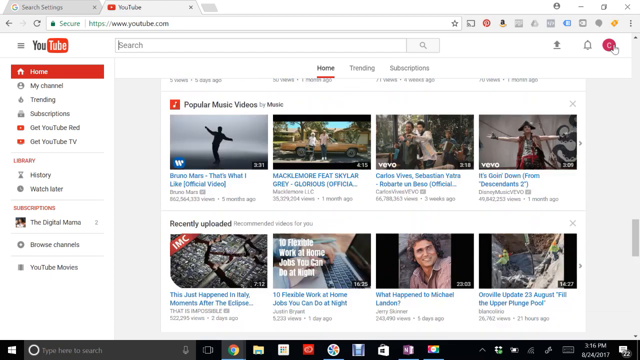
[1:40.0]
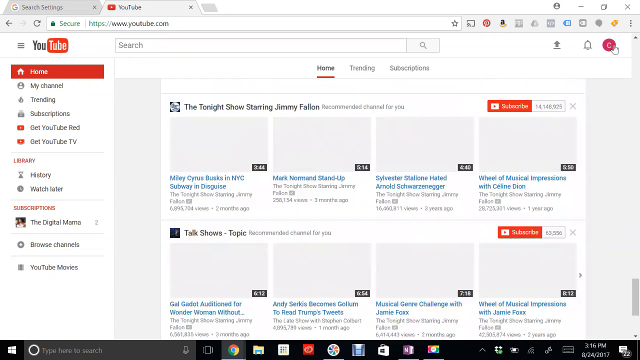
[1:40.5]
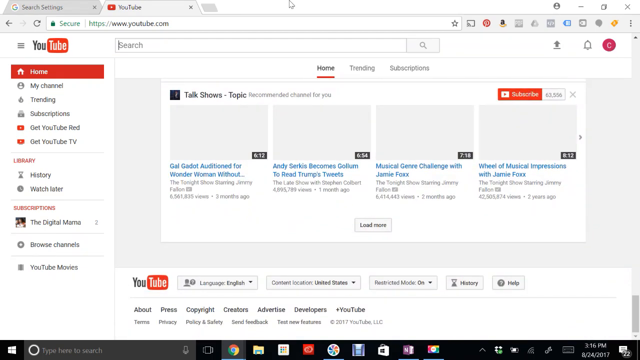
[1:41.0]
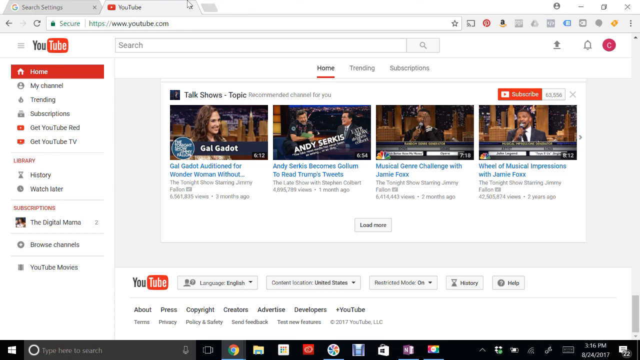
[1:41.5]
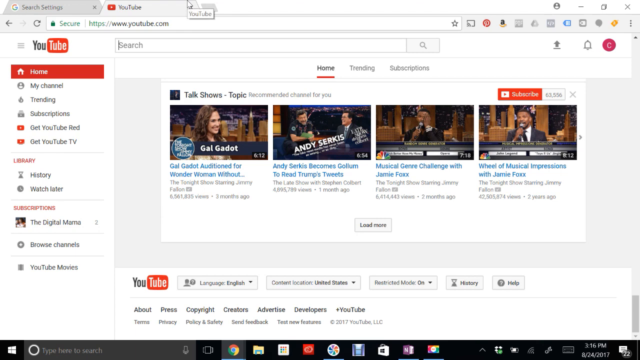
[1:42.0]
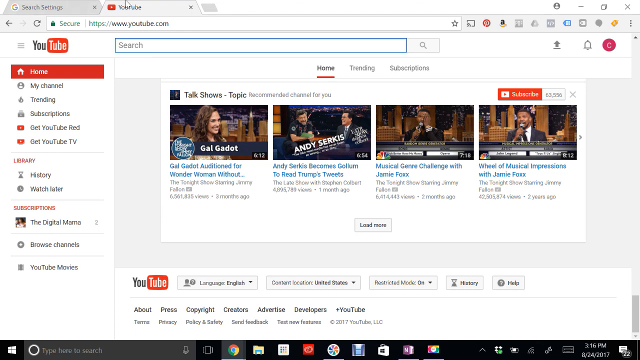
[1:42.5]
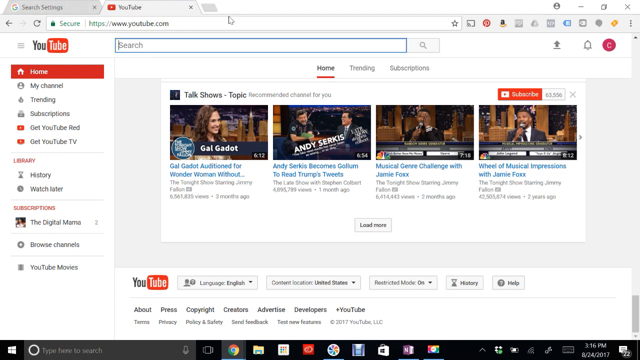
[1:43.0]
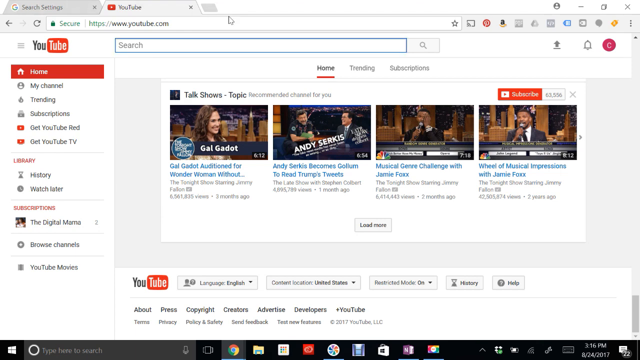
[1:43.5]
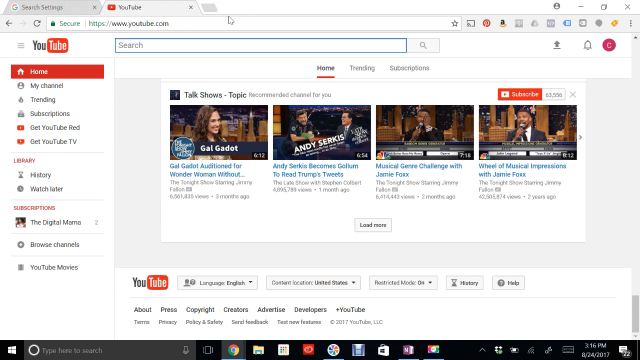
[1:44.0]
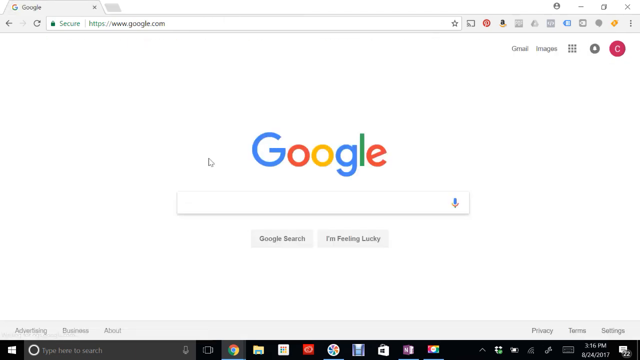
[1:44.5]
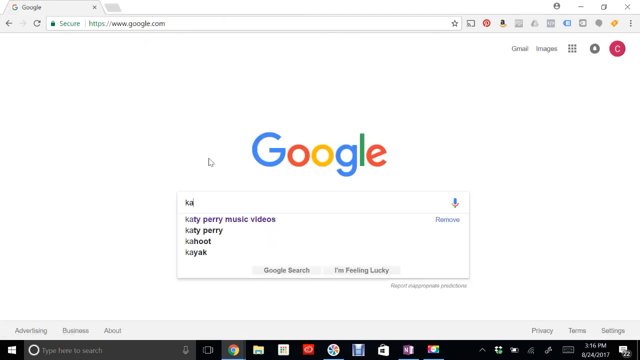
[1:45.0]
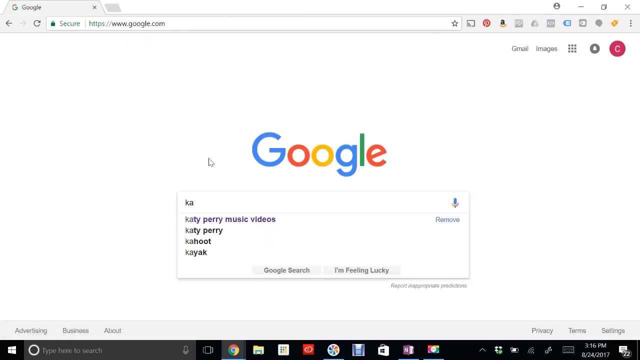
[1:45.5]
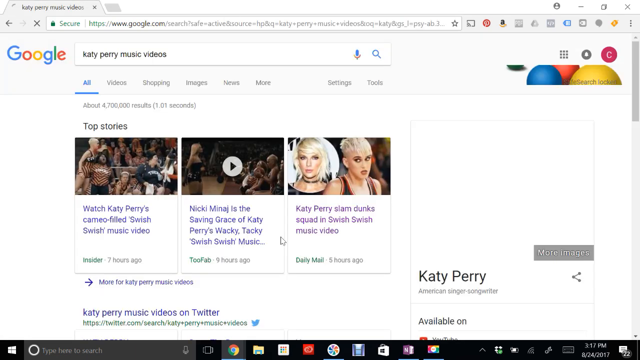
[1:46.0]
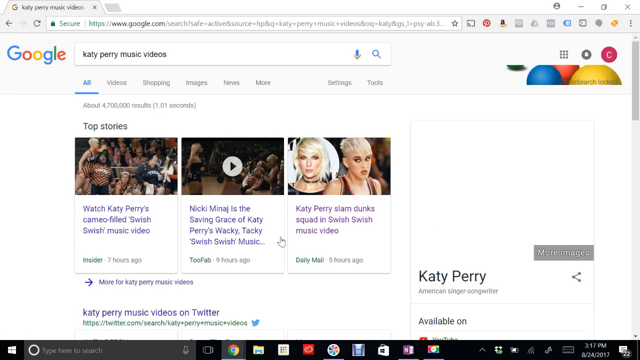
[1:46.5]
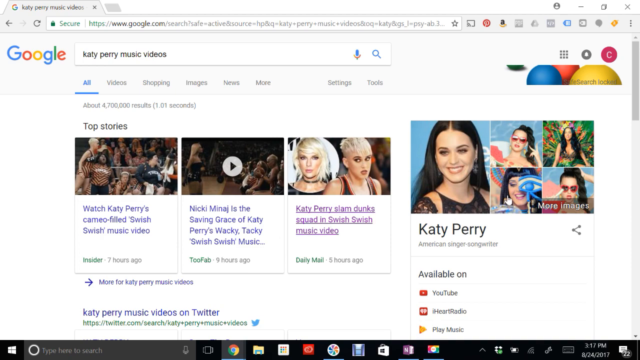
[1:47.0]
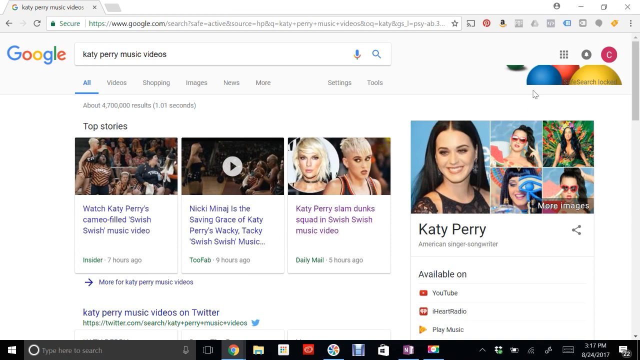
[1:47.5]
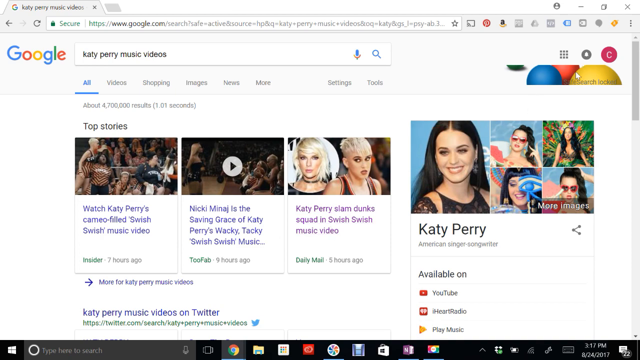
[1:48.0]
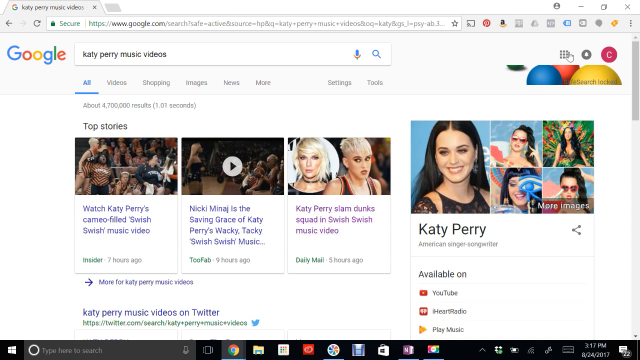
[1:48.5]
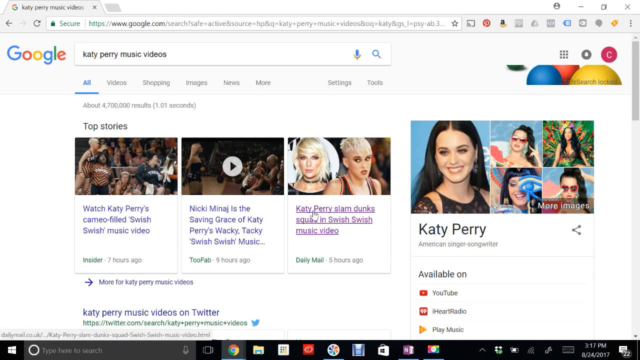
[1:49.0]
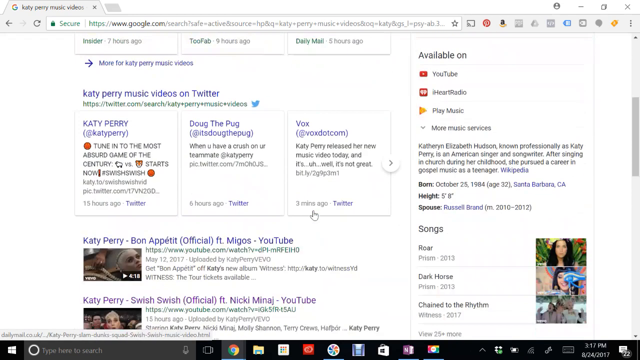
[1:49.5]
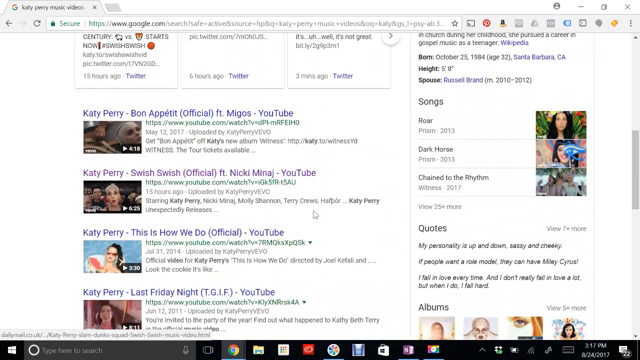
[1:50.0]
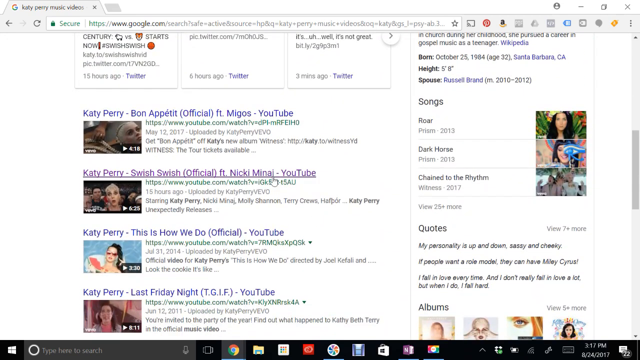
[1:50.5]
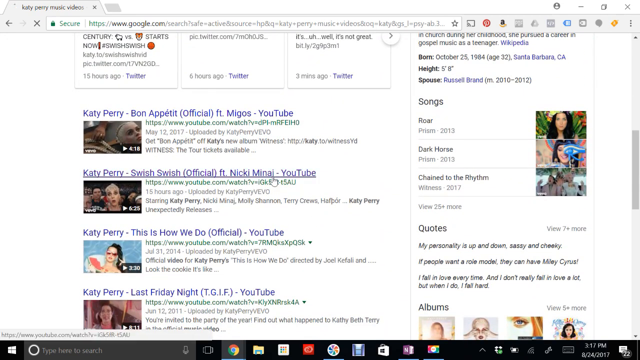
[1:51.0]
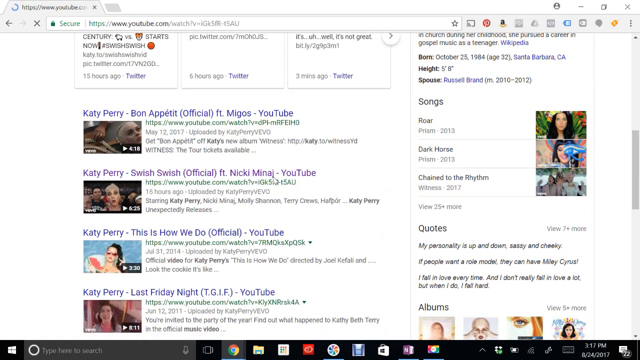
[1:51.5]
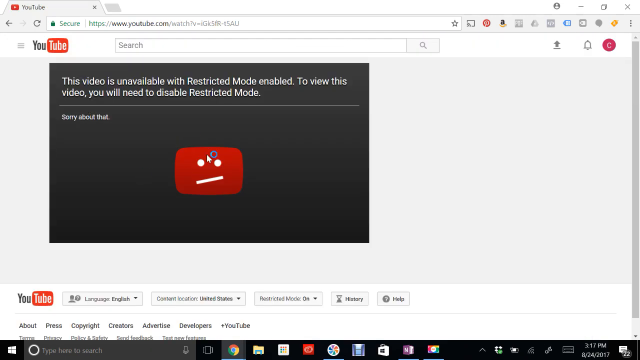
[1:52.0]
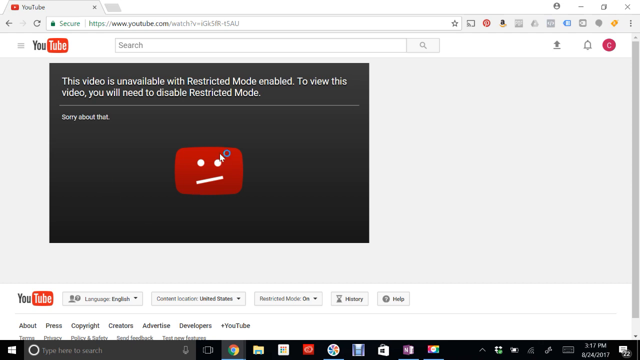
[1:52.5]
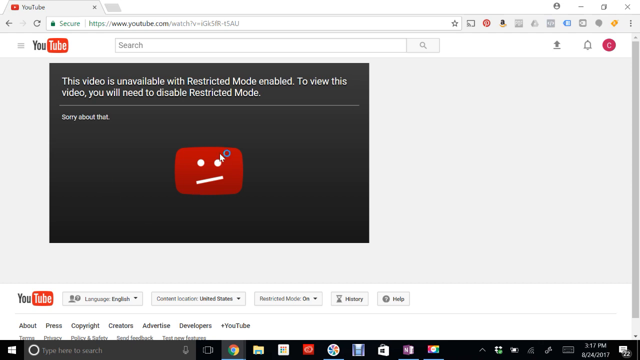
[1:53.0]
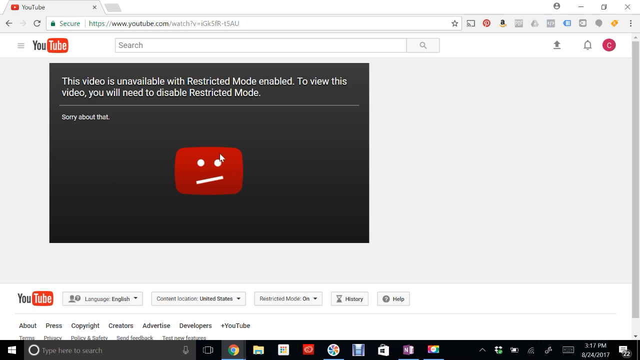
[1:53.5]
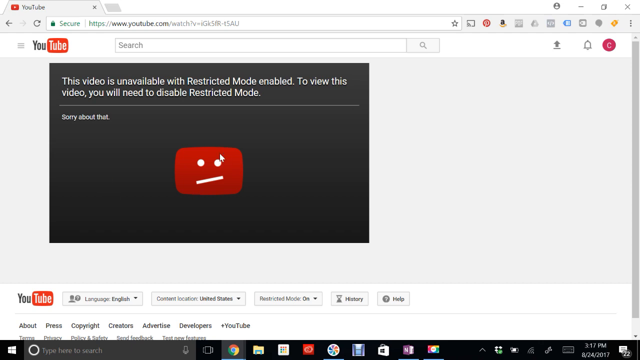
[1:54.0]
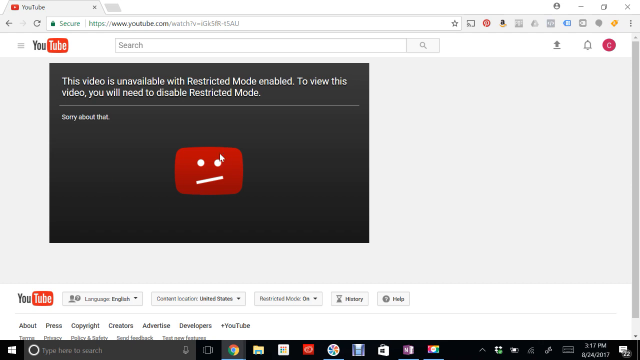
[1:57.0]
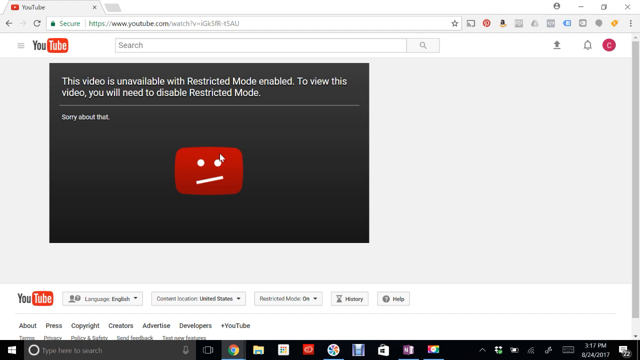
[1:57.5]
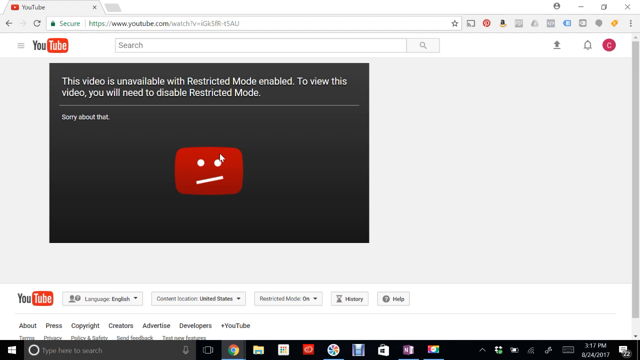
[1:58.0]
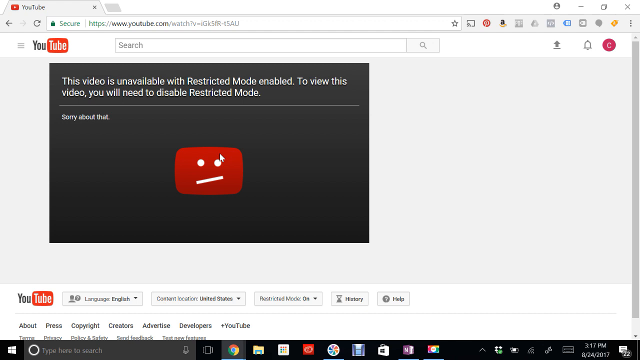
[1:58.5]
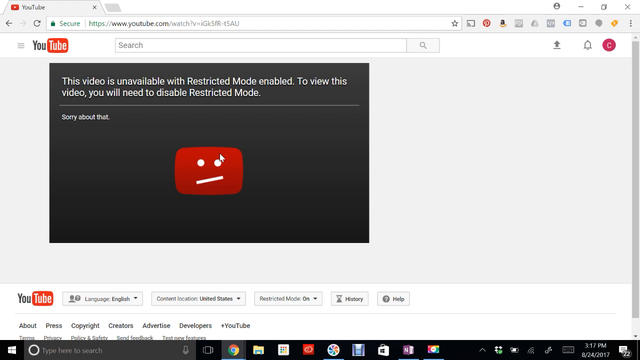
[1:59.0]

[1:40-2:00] In YouTube, the user scrolls right down to the bottom of the screen, where restricted mode is shown as on. Someone then searches in the Google page for Katy Perry music videos and scrolls down or clicks on a video called Swish Swish. Instead of the video, a page appears with an unhappy-looking YouTube face and the text "this video is unavailable with restricted mode enabled. To view this video you'll need to disable restricted mode."